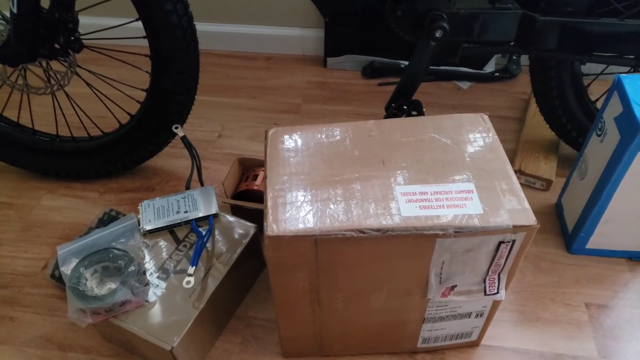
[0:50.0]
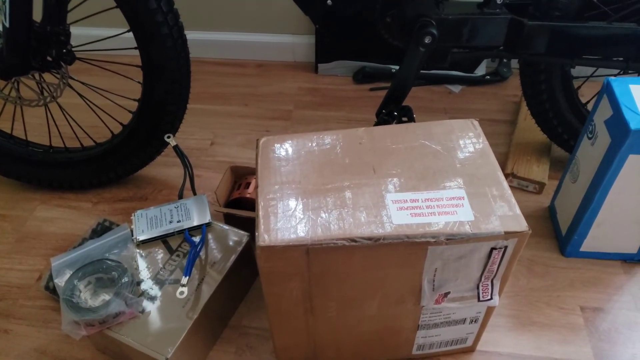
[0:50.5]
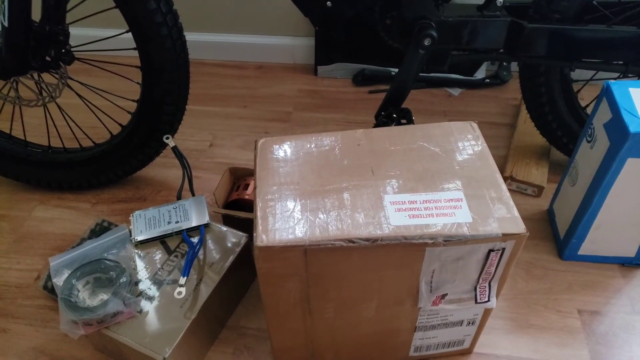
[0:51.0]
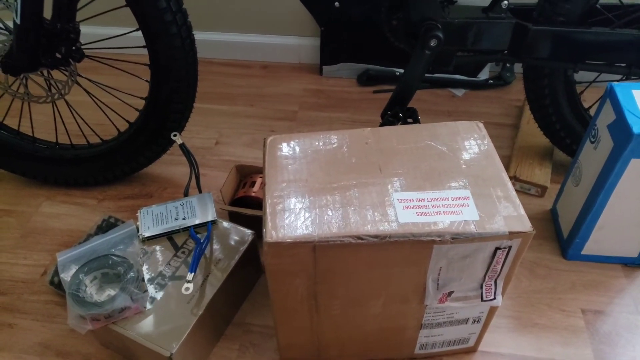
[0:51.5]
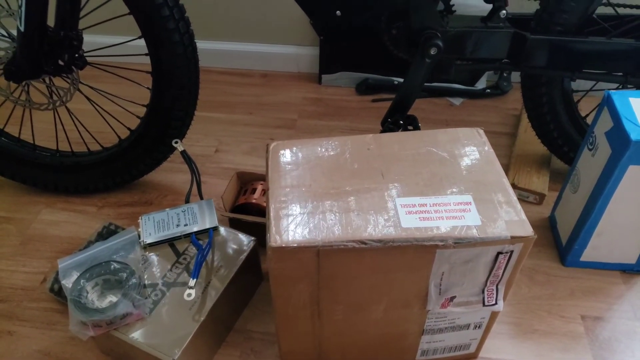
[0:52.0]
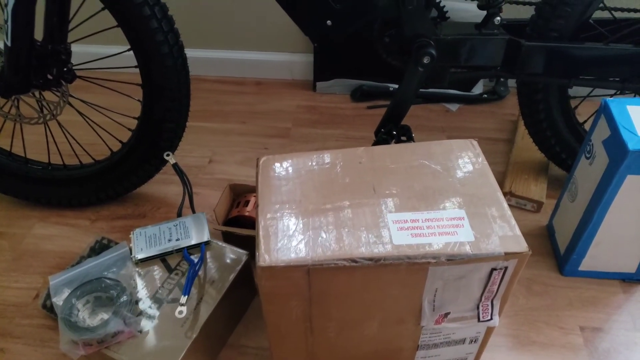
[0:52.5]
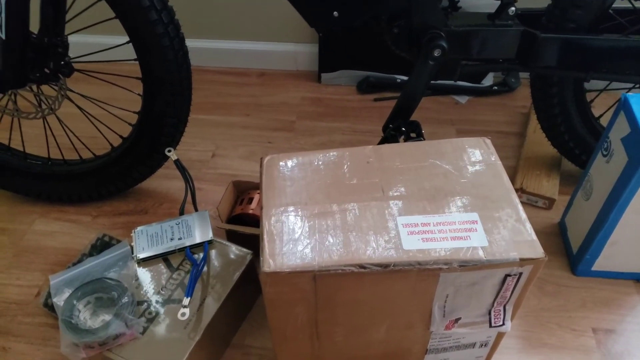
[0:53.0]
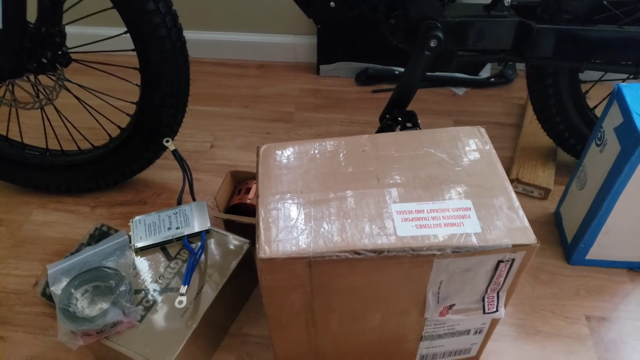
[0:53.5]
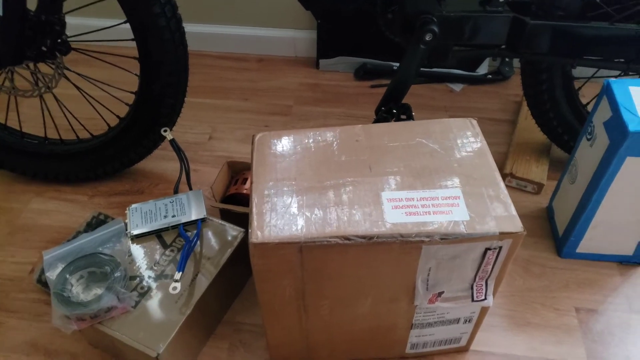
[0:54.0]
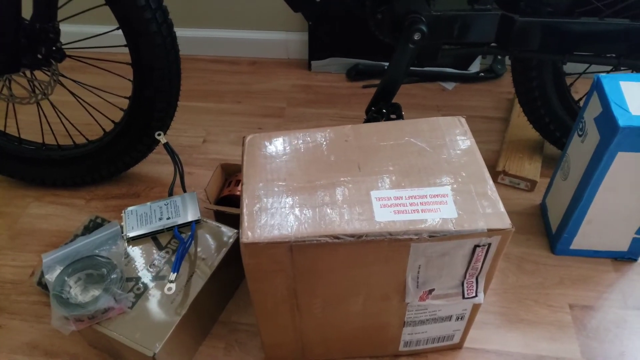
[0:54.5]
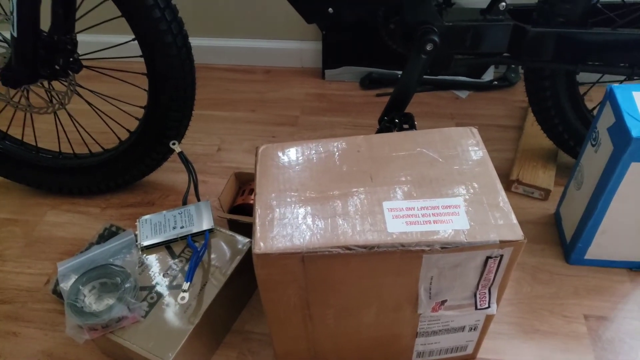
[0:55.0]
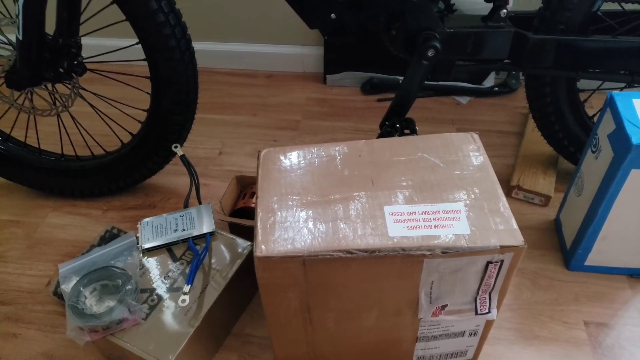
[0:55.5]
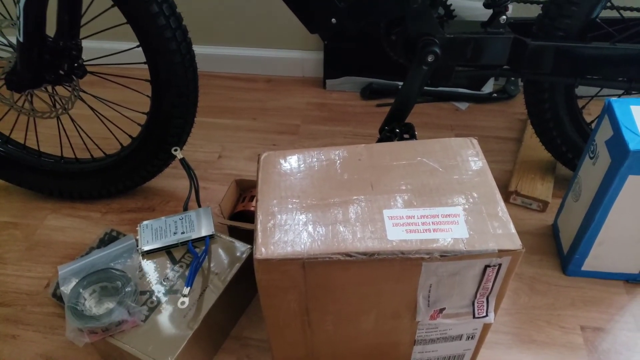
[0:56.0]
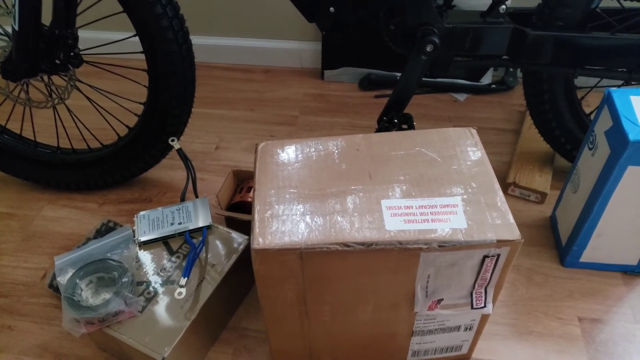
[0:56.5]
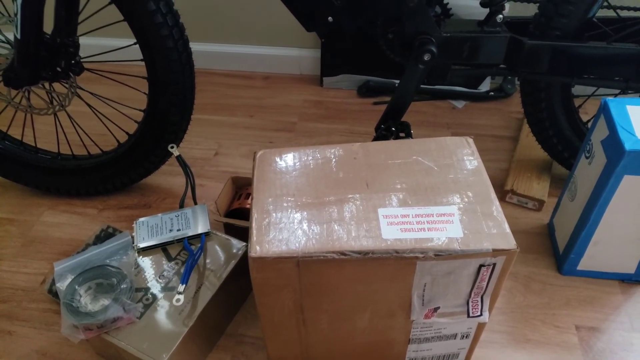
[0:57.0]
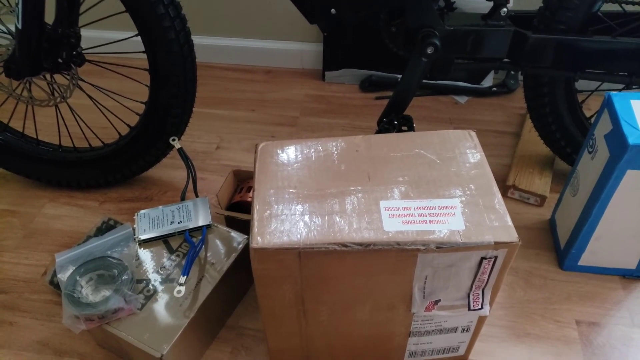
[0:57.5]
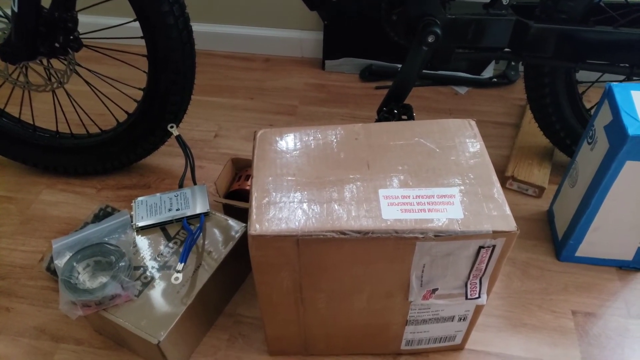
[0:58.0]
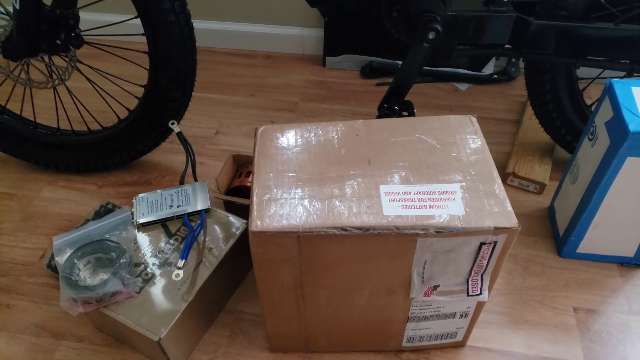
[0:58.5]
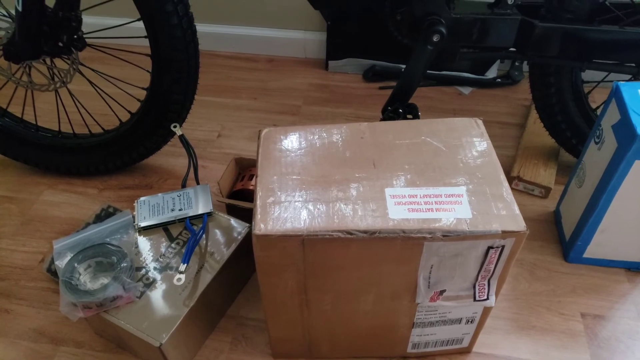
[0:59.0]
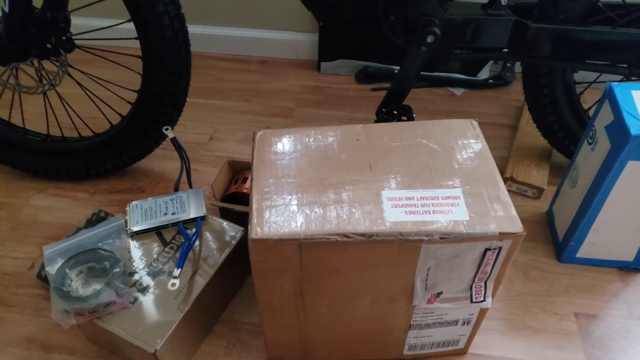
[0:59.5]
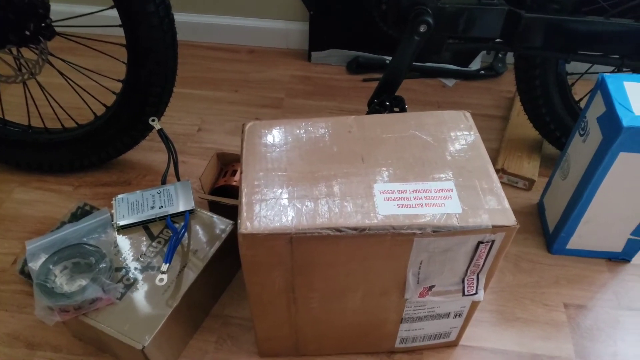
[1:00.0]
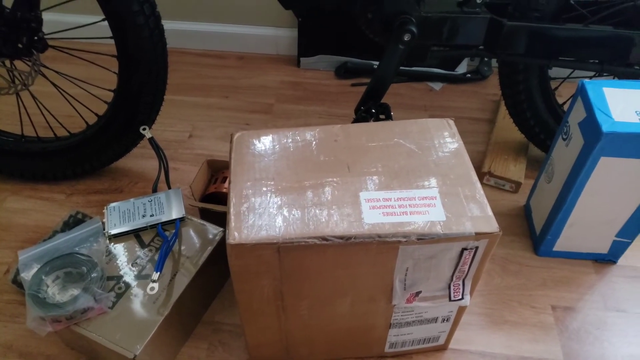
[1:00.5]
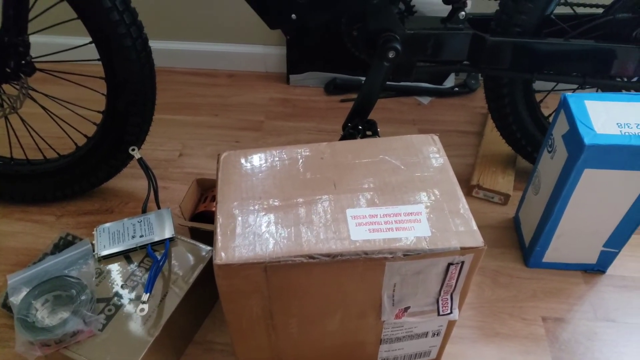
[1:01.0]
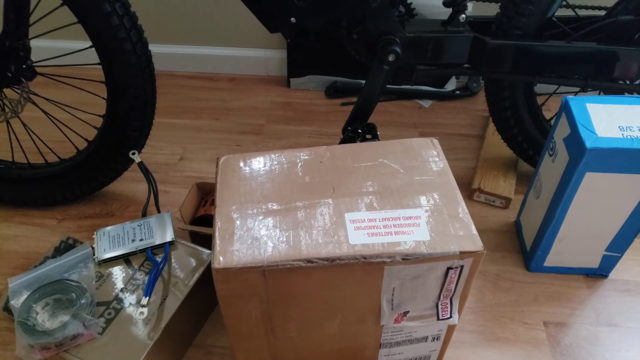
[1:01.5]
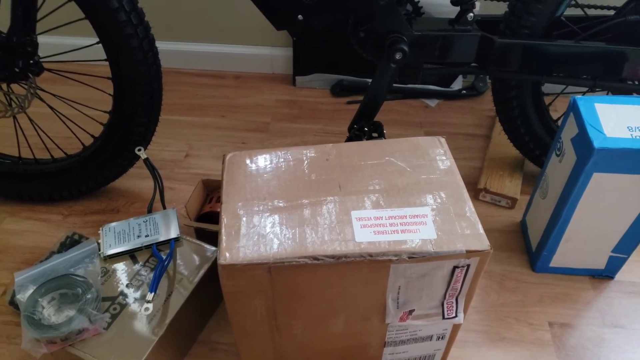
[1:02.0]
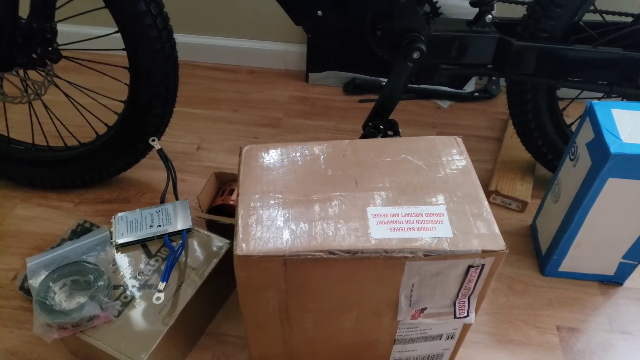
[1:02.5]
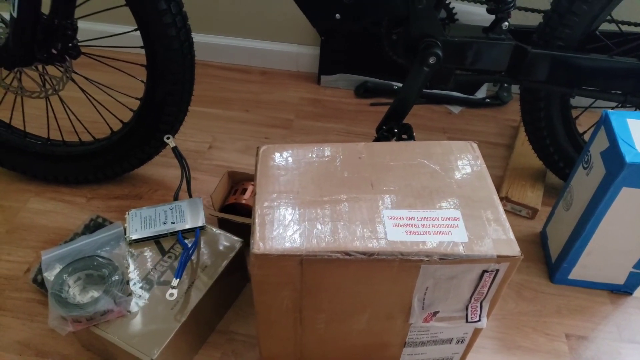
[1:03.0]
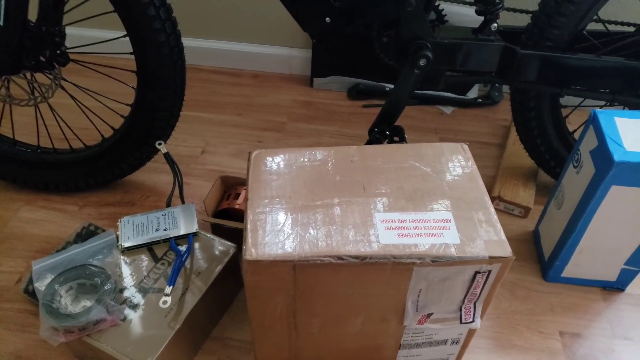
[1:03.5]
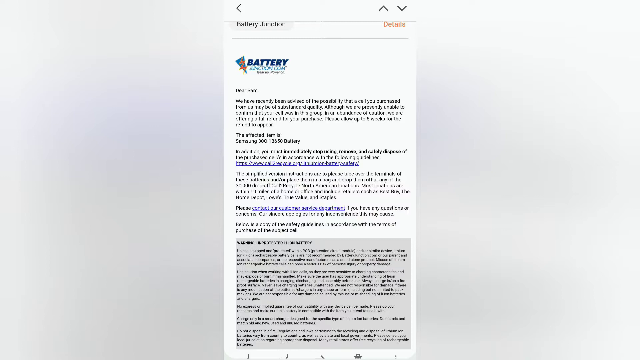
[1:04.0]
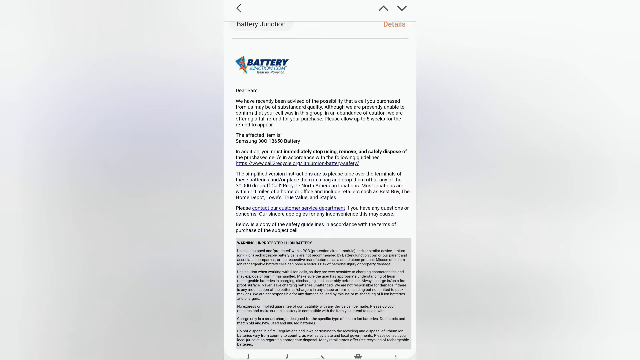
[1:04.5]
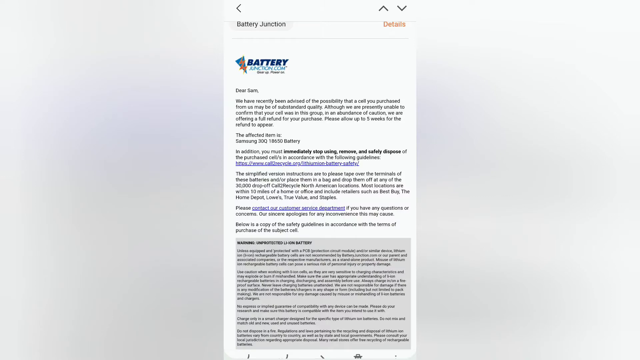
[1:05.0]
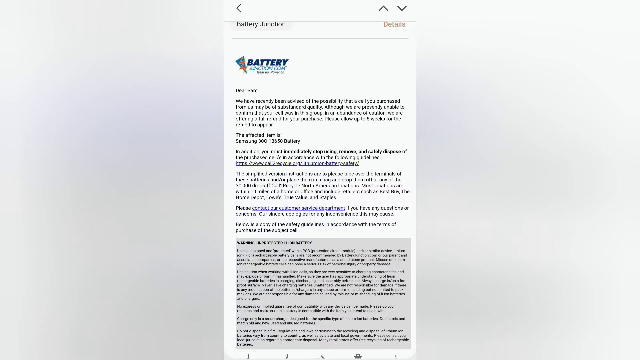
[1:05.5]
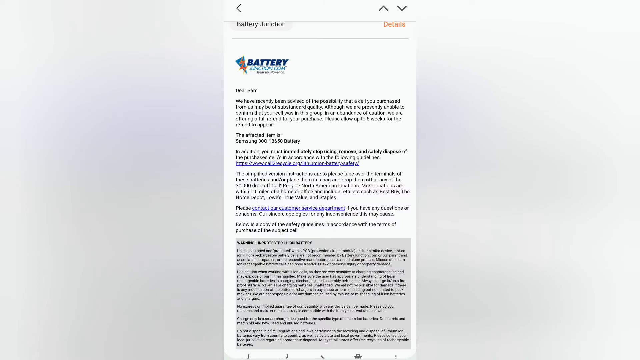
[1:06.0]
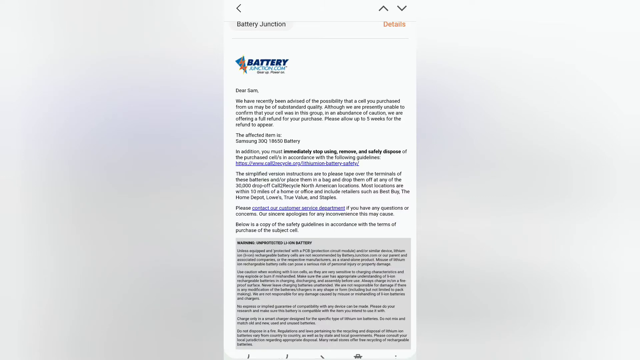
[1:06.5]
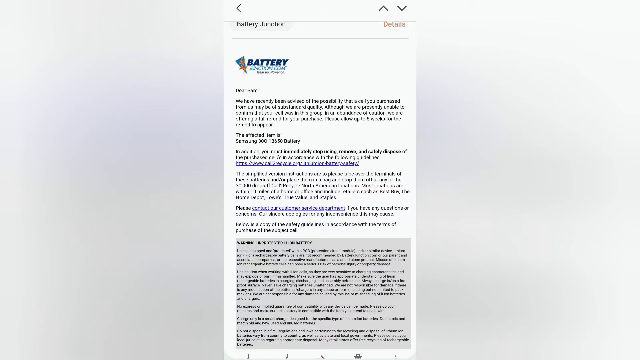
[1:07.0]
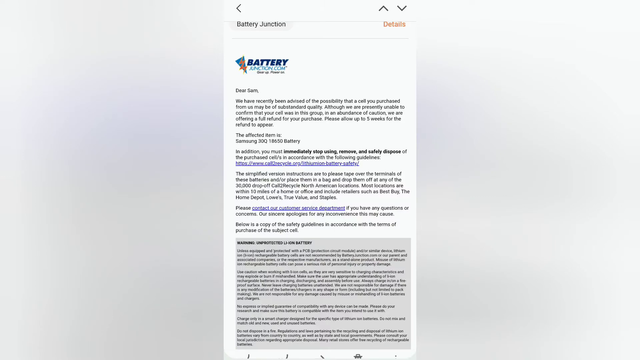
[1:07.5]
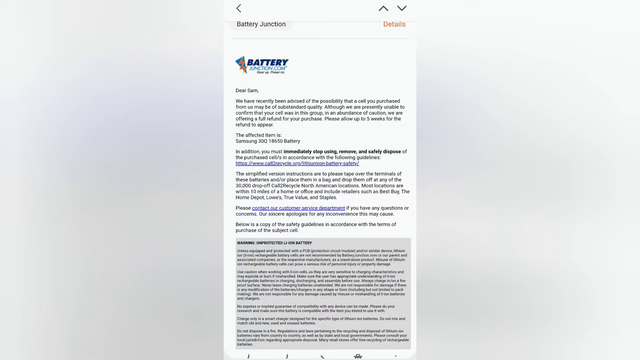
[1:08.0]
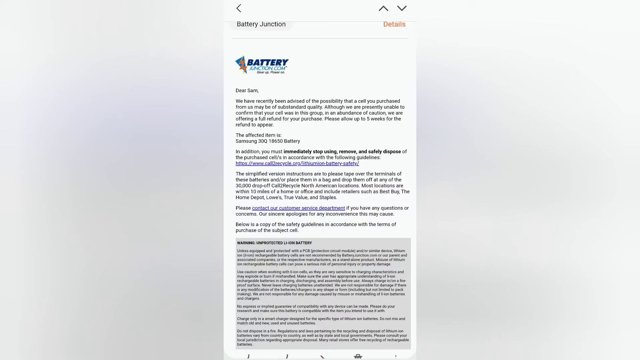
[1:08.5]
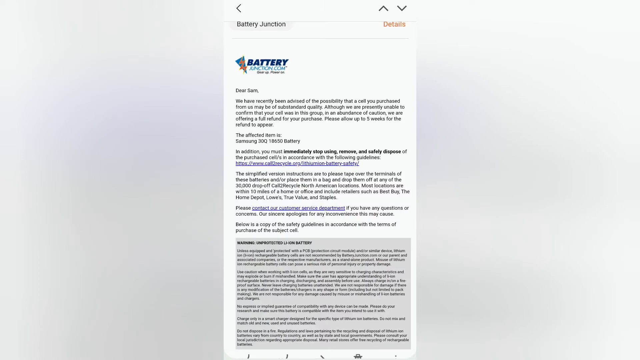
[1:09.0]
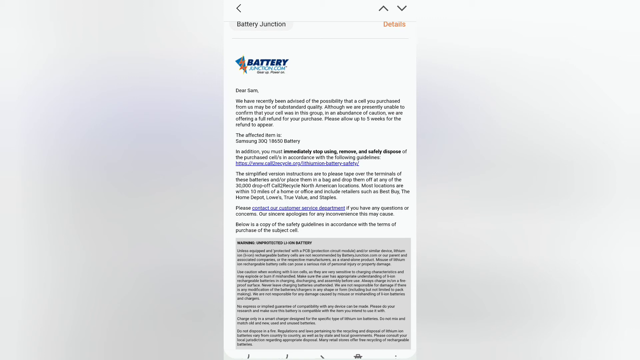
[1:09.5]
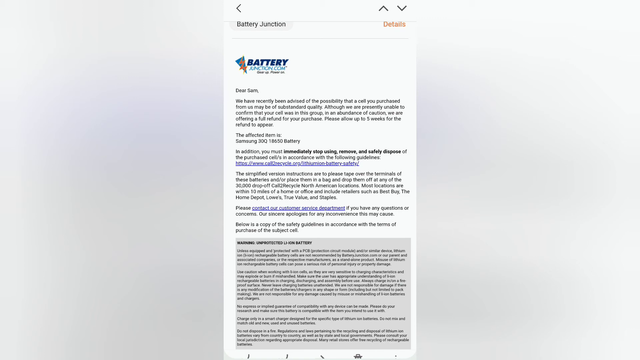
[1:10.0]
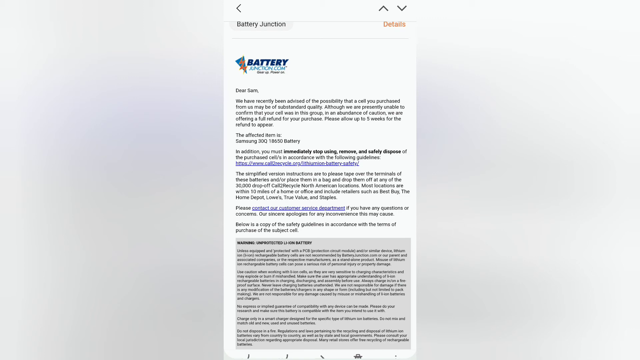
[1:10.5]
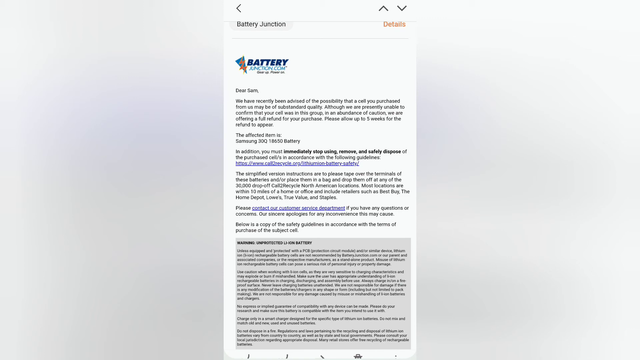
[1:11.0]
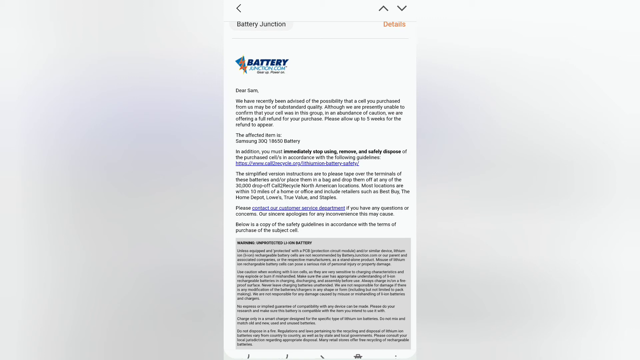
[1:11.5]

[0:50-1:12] The camera is still focused on the box, with the angle slightly changed, slightly zoomed in and more to the right. The footage shakes a little, then immediately cuts to an email that looks like a phone screenshot, vertically aligned in a mobile phone format. At the very top it says "battery junction" next to a battery logo, suggesting the email is probably from the company Battery Junction. The introduction of the email mentions that the person who filmed the video had a quality issue. The email has a plain white background with grayish text. It is about a battery, specifically a Samsung 30 Q battery, and appears to concern a replacement battery issue, probably for a mobile phone, involving product standards.